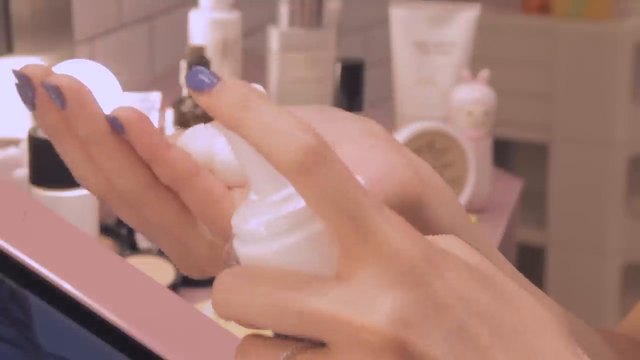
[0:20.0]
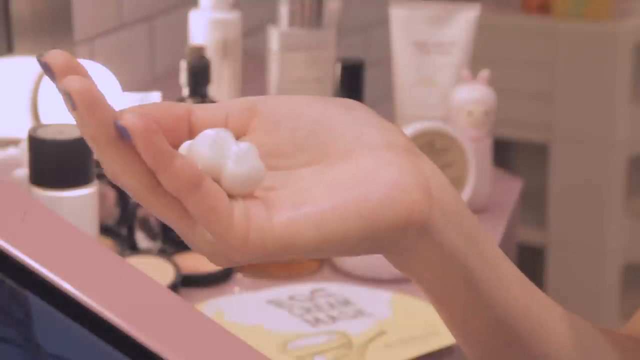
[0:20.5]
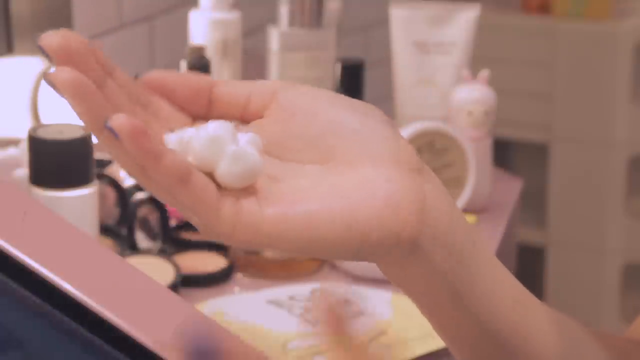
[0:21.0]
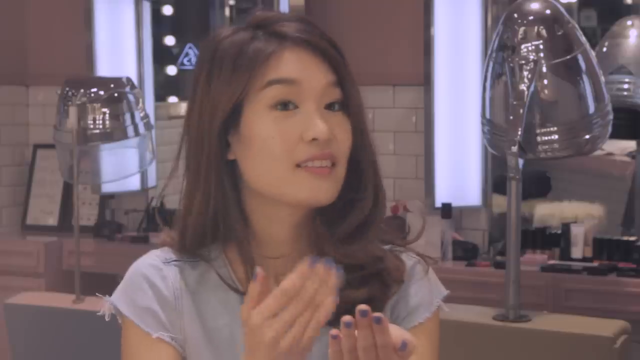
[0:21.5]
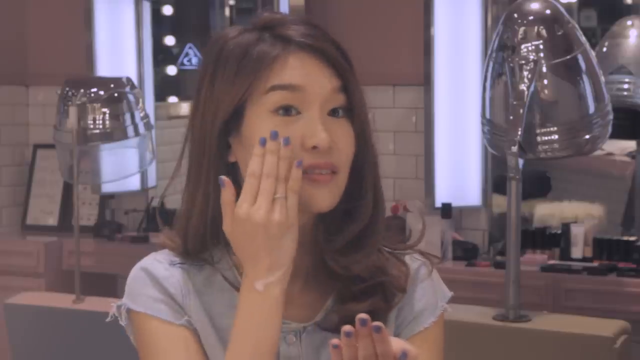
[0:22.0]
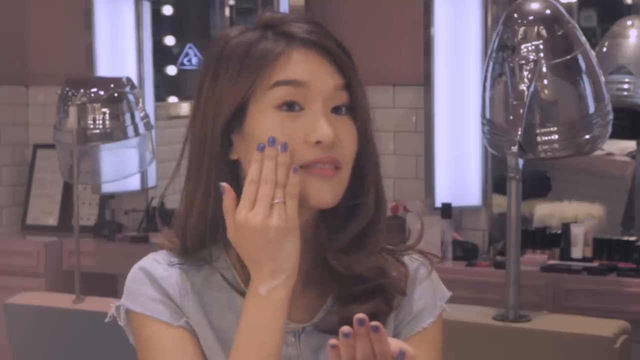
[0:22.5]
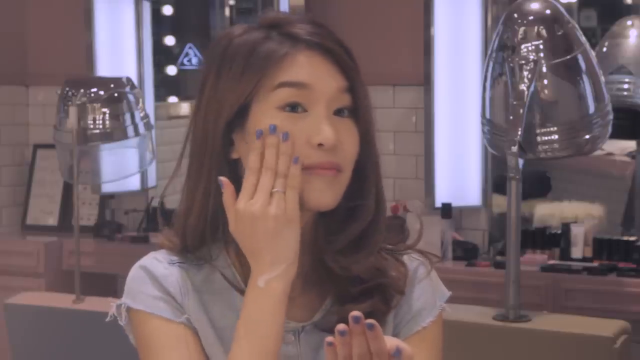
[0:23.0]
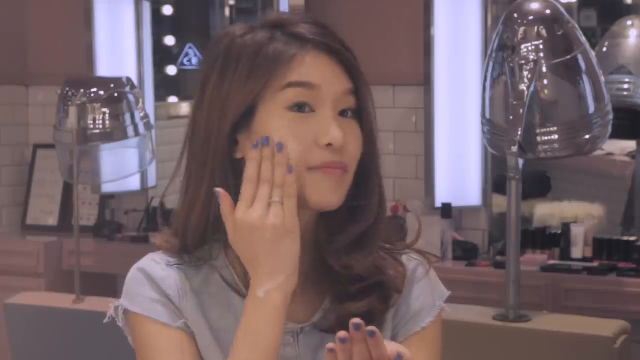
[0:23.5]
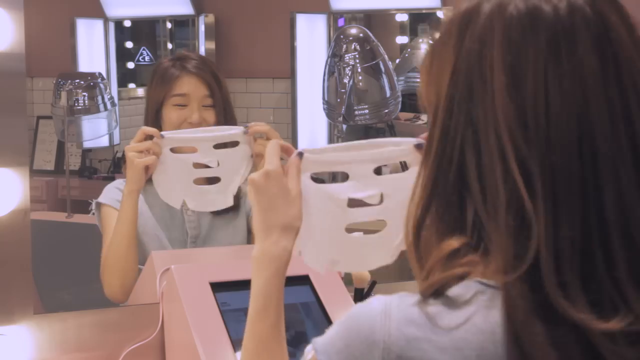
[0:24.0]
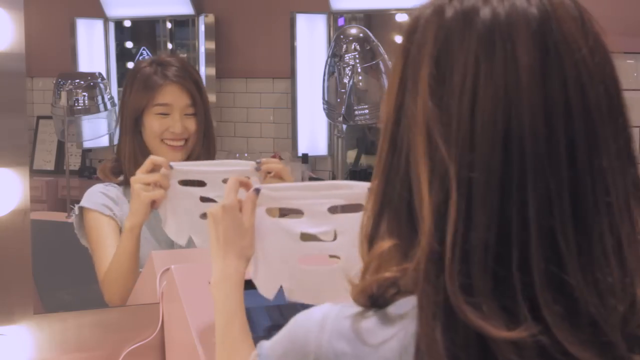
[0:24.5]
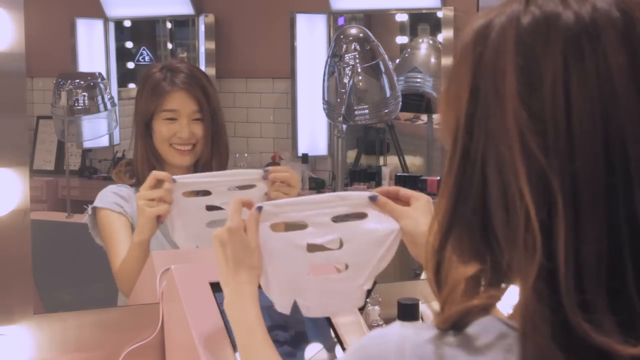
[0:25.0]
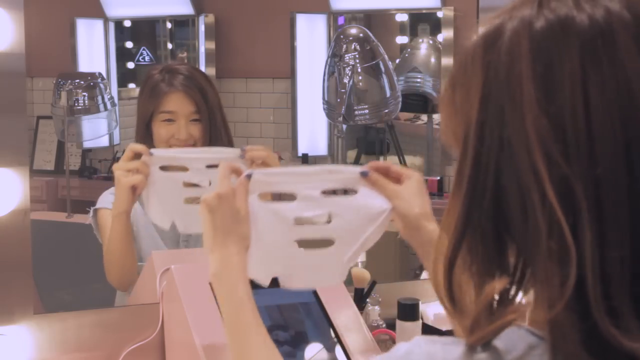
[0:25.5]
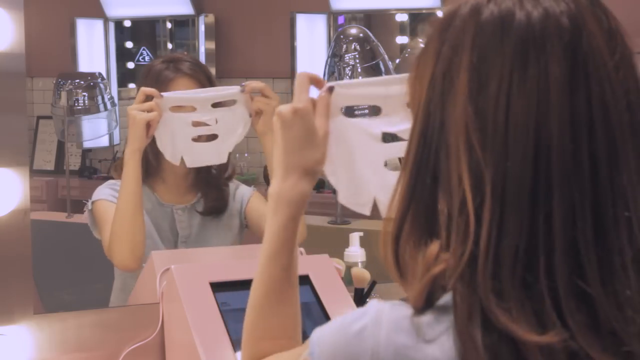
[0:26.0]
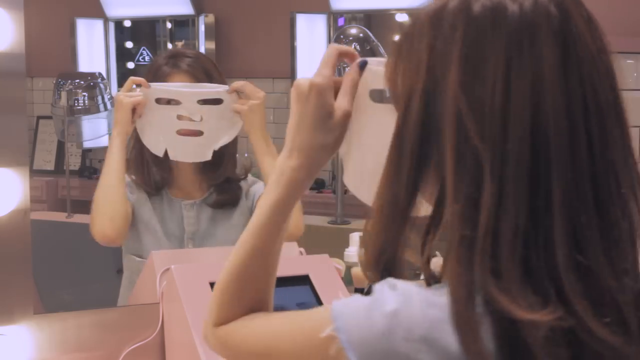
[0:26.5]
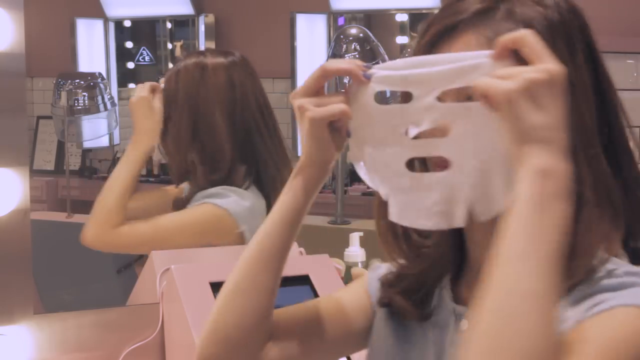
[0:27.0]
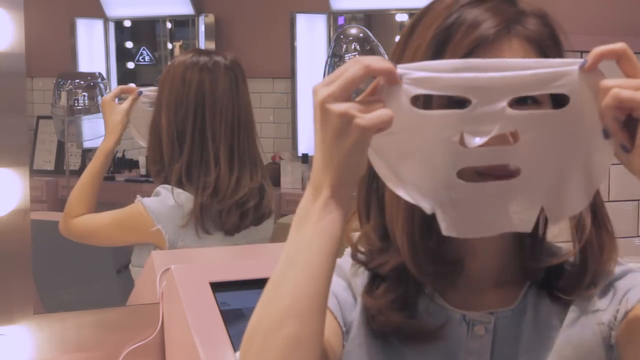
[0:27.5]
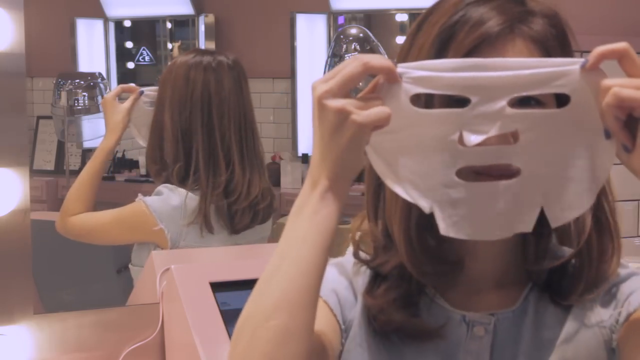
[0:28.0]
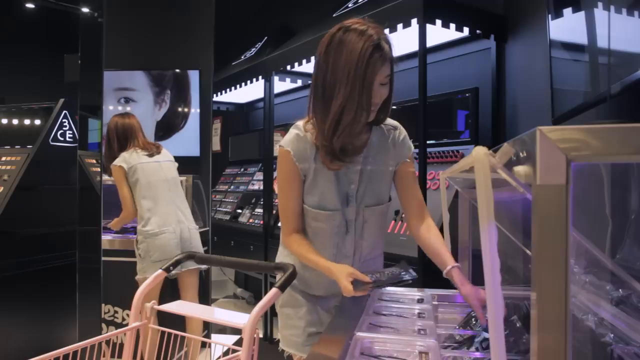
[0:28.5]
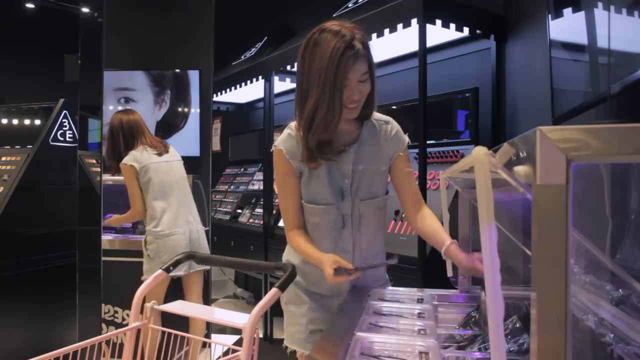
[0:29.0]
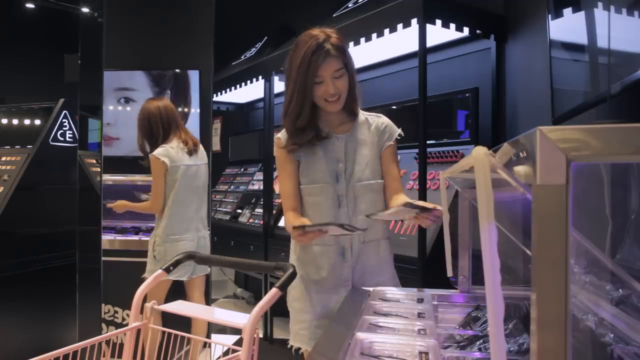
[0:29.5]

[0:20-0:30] The woman sits on a chair, pours a white cream onto her hands and applies it to her face. She then takes a white mask and fits it on while smiling. Next she goes to the shelves, takes products and puts them in the pink trolley, reading and checking the instructions on each one with a happy face. She puts makeup items and lip items in the trolley. The salon has a hair dryer and a big screen showing the woman's face. Everything in the salon is pink and grey. The woman is alone in the room; there are no other people.